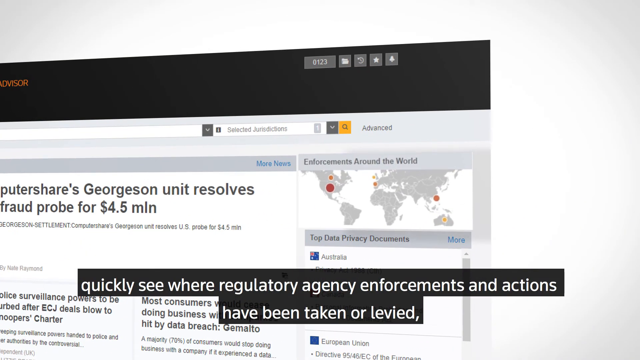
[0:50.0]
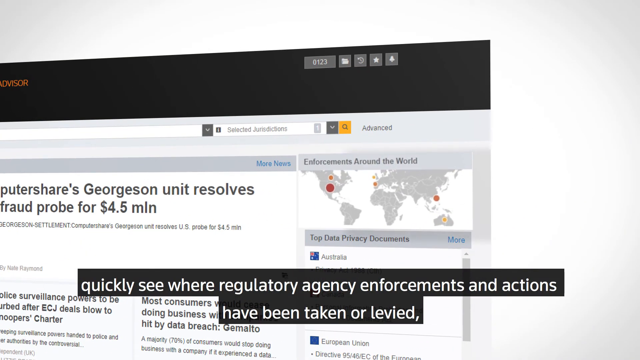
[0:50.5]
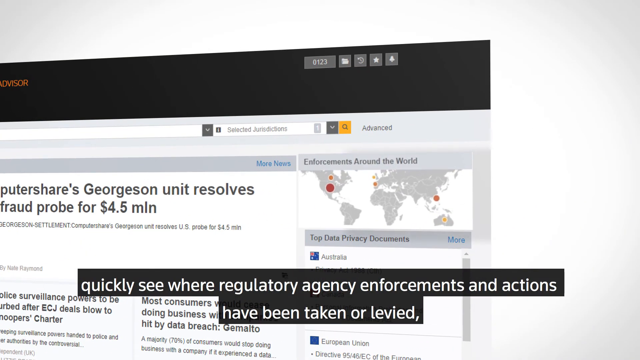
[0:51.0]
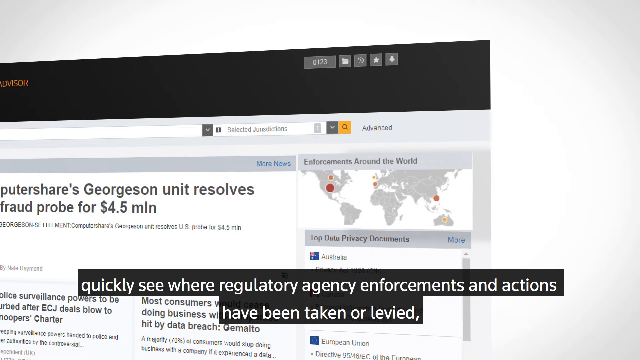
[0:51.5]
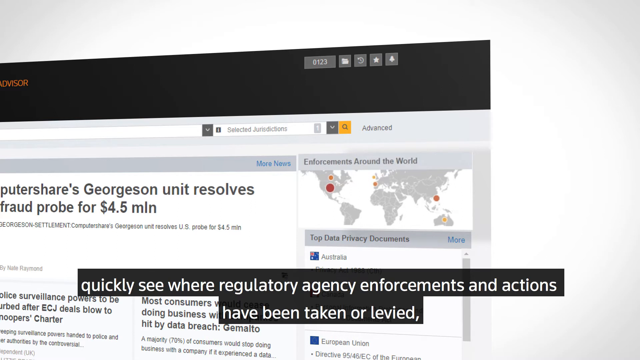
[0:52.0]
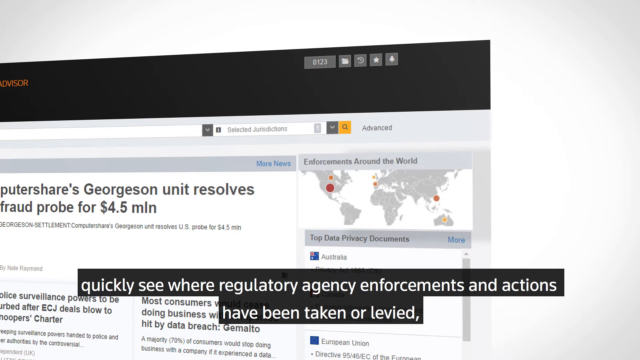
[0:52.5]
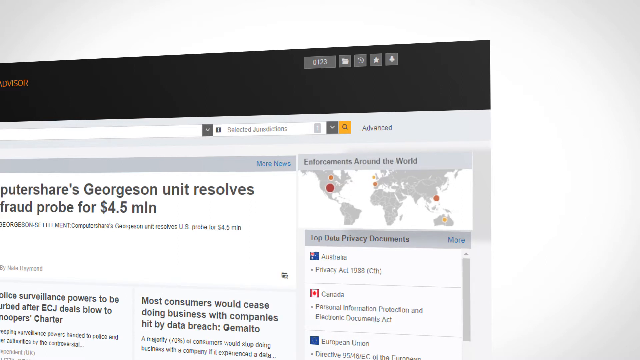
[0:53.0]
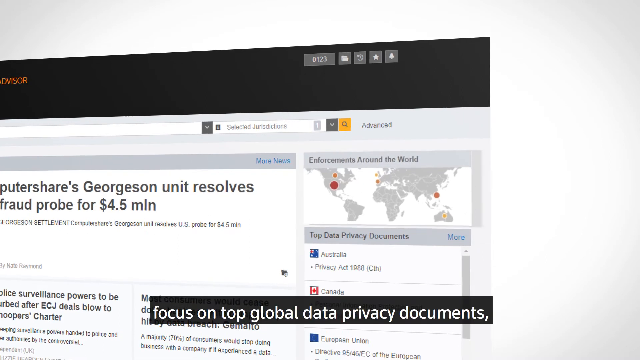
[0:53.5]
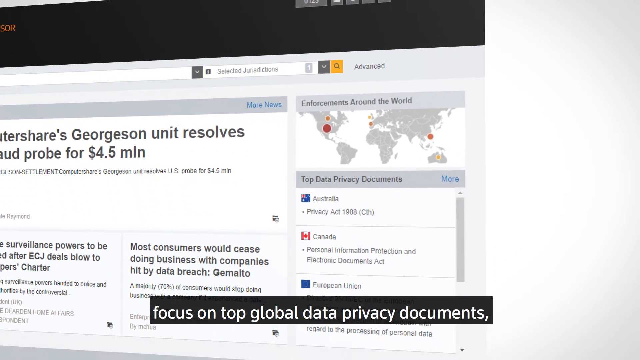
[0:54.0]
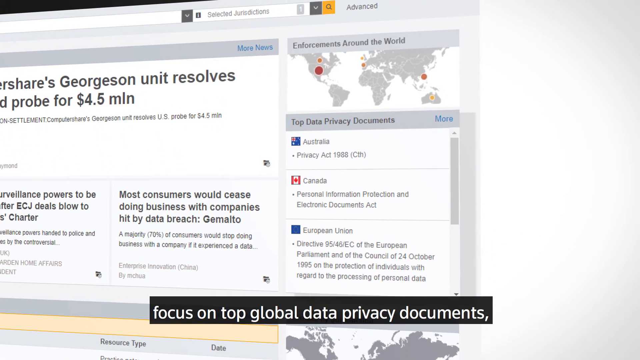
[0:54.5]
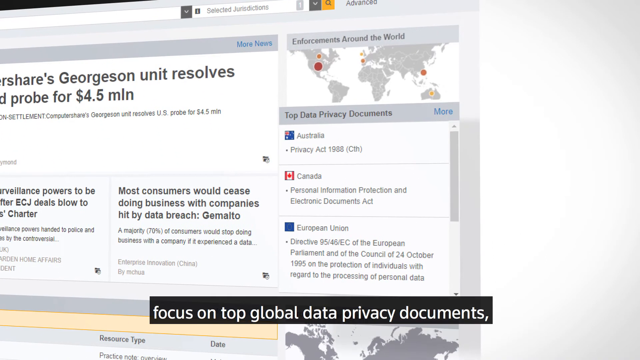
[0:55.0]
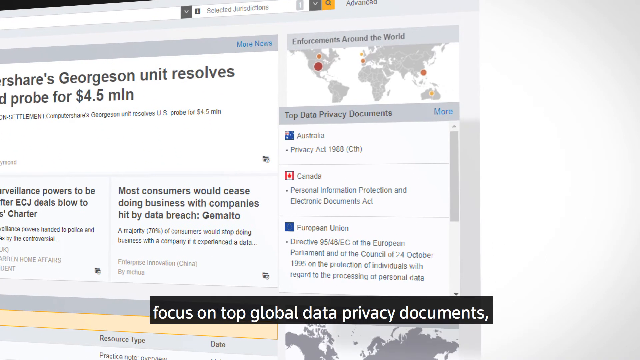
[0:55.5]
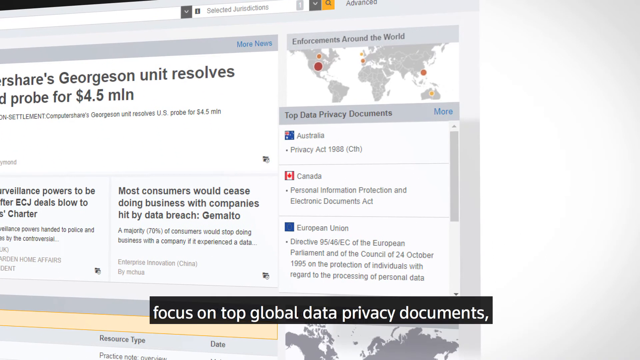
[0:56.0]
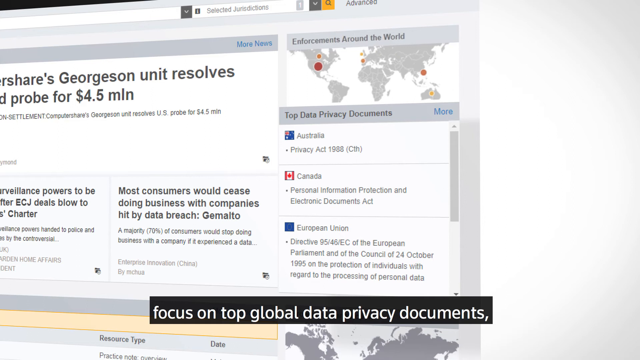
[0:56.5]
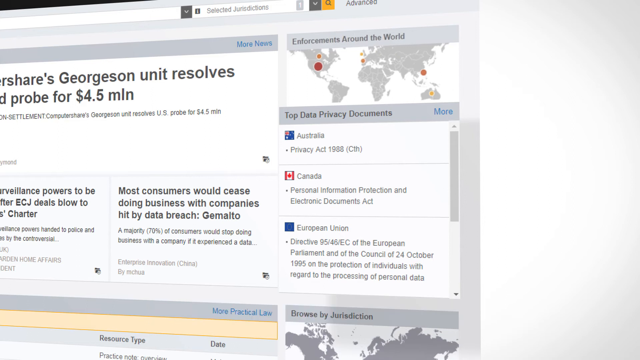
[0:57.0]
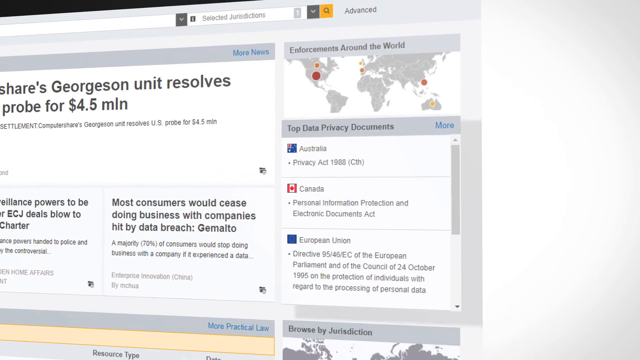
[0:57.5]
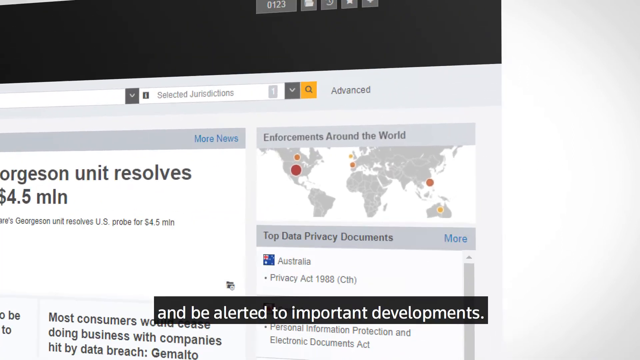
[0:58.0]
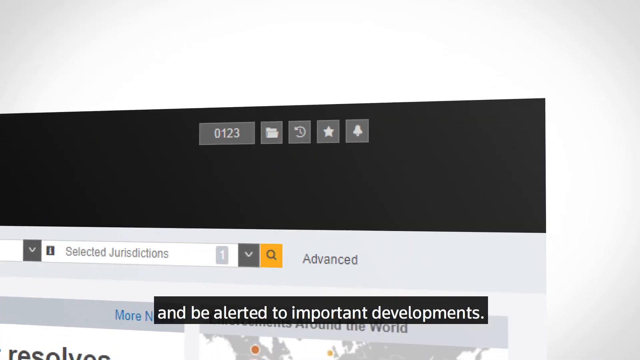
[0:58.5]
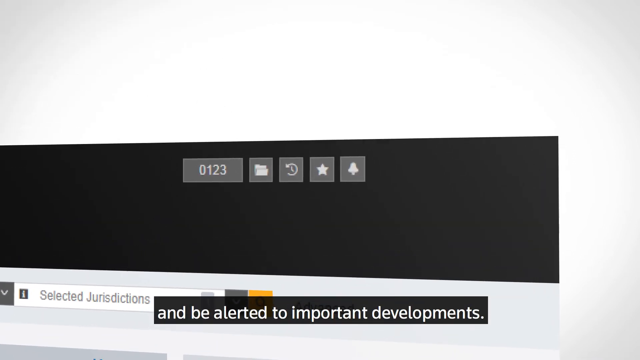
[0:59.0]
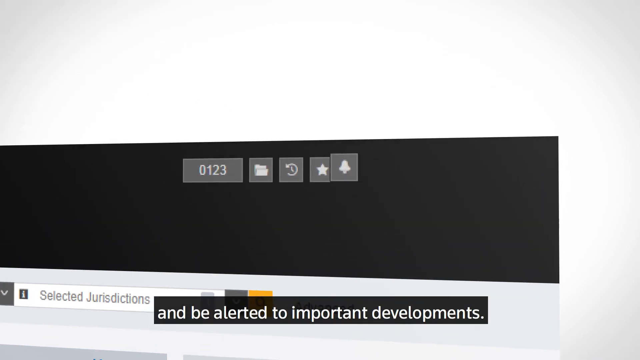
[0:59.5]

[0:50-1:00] The same web page remains on screen, now moved away from the world map. "Top data privacy documents" is clicked, and three countries are listed: Australia, Canada and the European Union. Under Australia an act is listed, "Privacy Act 1988"; under Canada, "personal information protection and electronic documents acts"; and the European Union is listed after that. The view then moves to a notification bell.